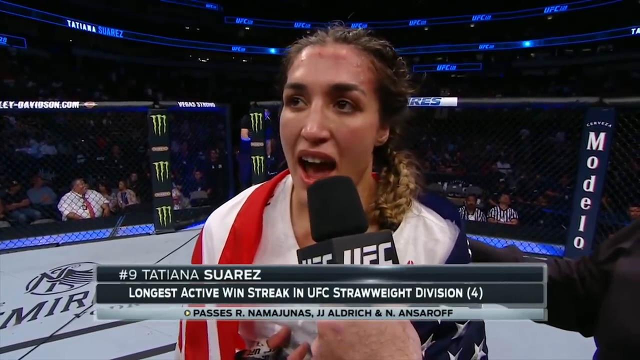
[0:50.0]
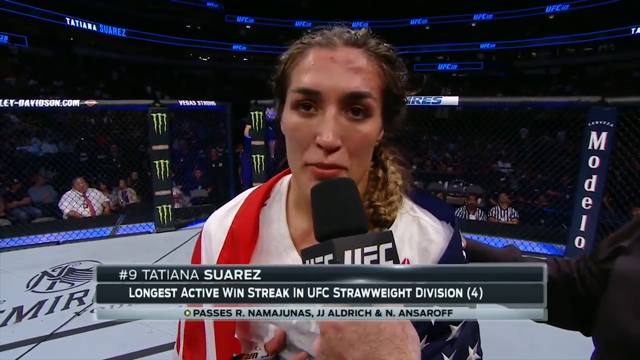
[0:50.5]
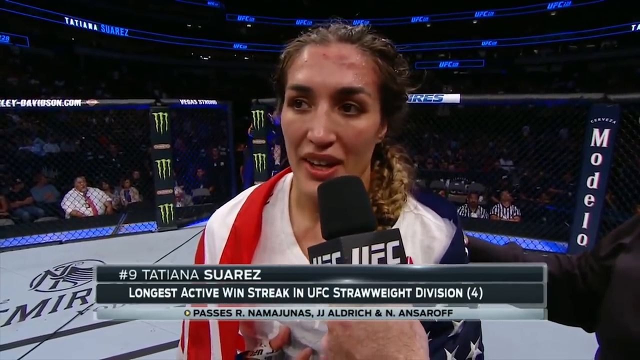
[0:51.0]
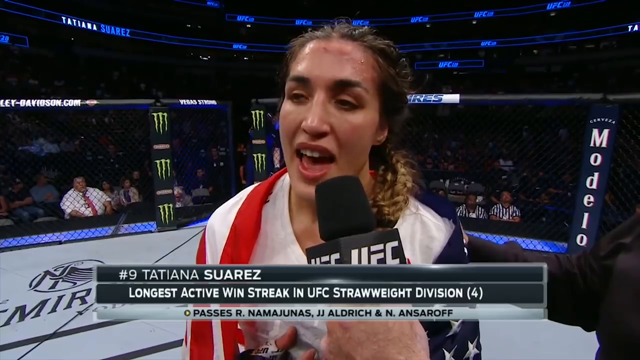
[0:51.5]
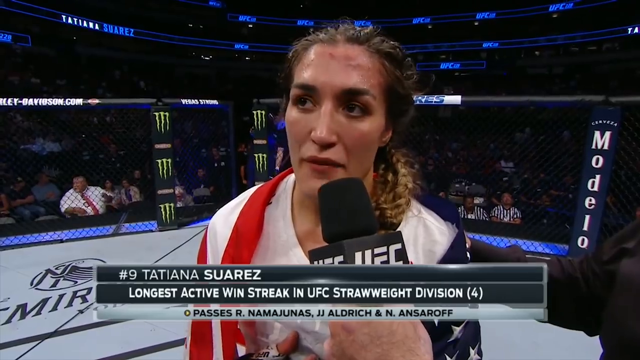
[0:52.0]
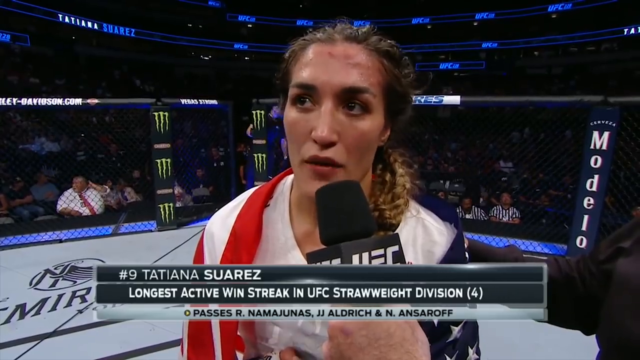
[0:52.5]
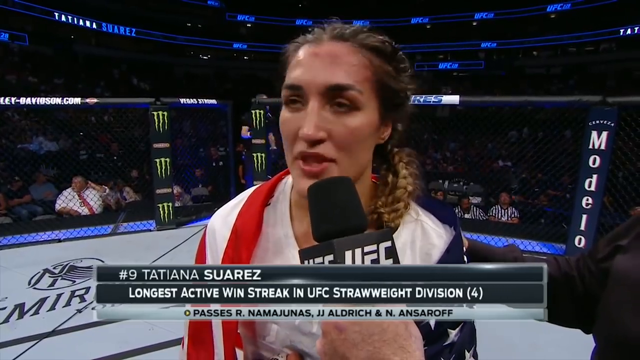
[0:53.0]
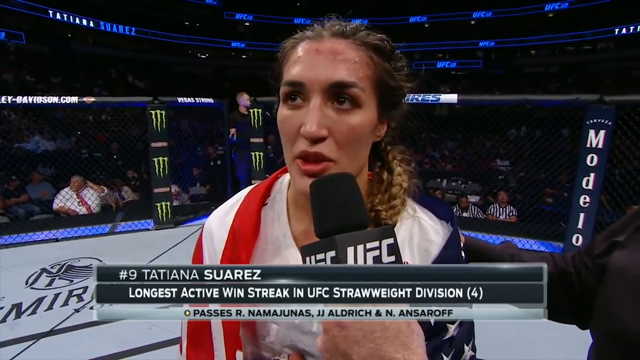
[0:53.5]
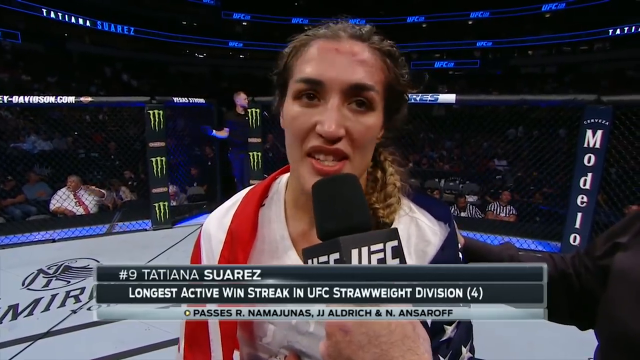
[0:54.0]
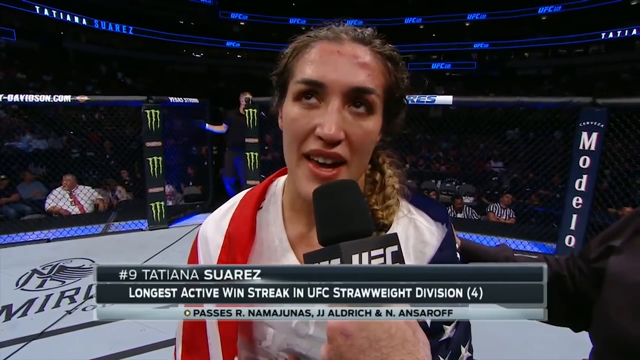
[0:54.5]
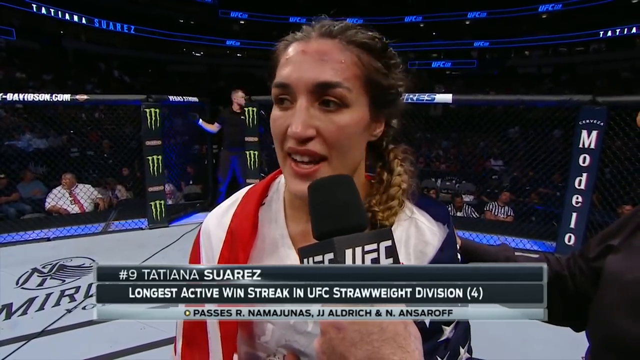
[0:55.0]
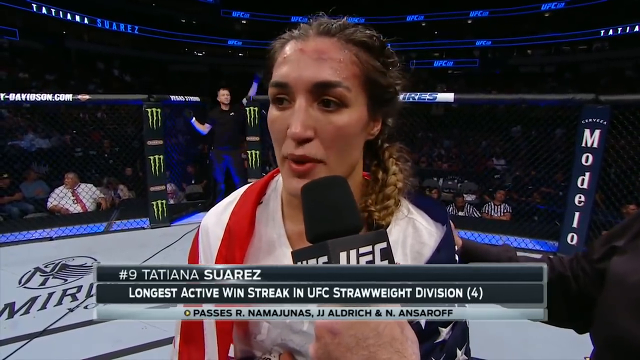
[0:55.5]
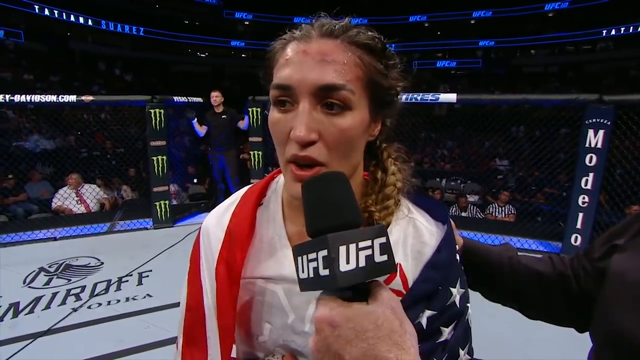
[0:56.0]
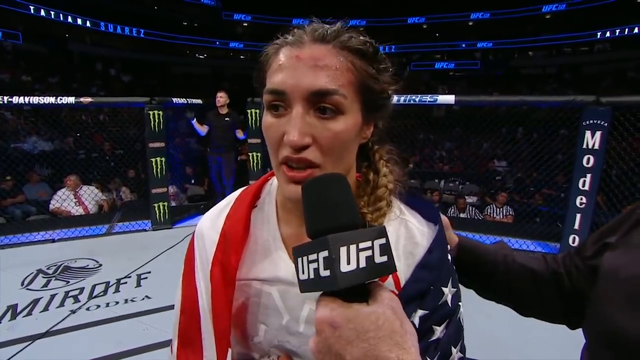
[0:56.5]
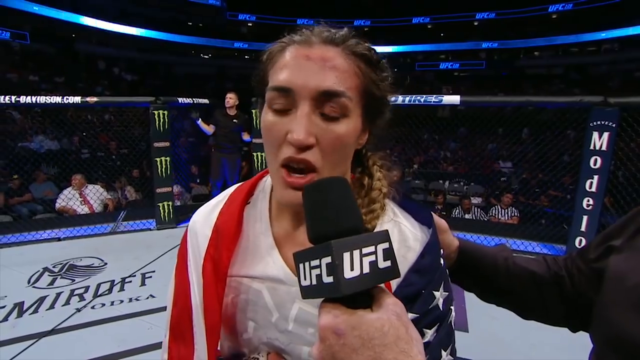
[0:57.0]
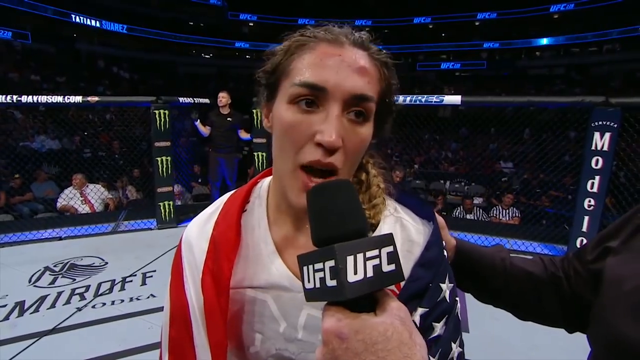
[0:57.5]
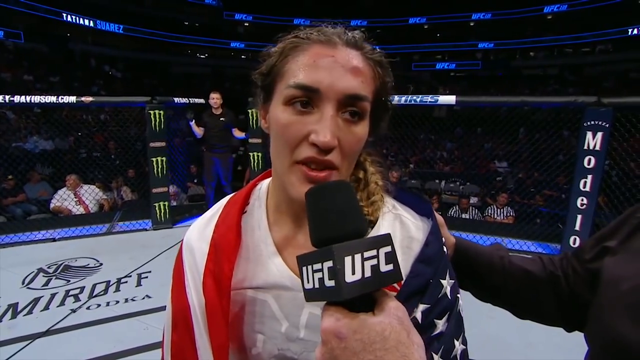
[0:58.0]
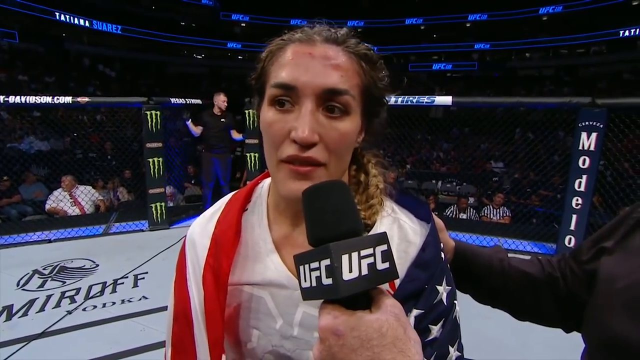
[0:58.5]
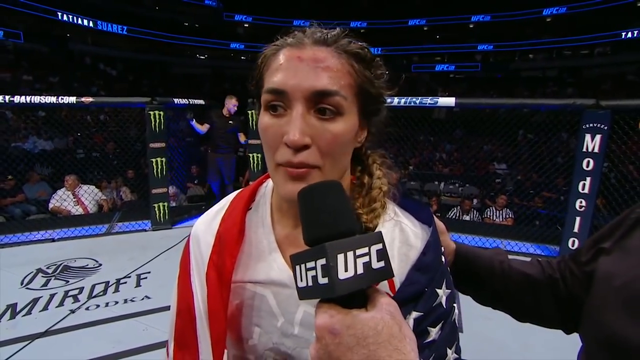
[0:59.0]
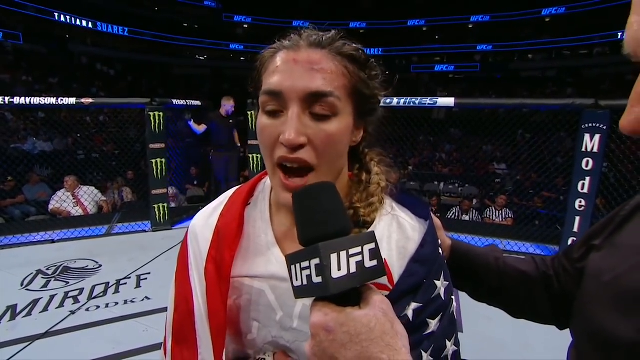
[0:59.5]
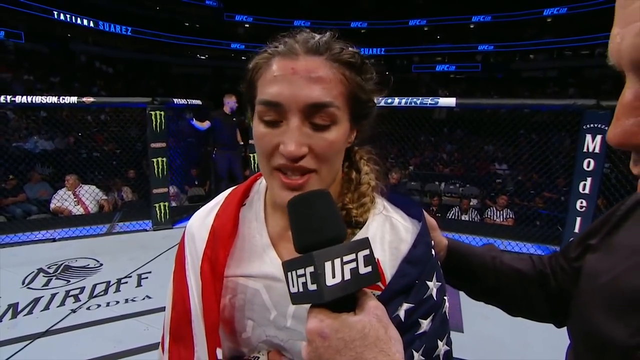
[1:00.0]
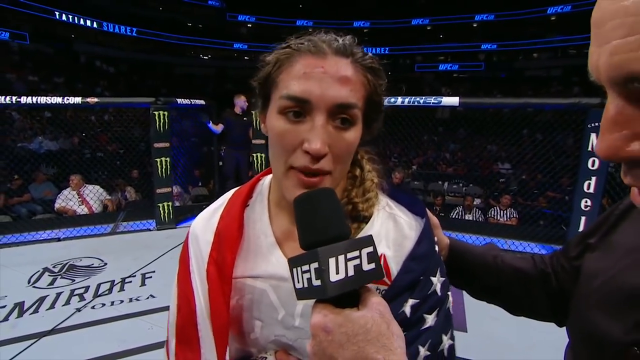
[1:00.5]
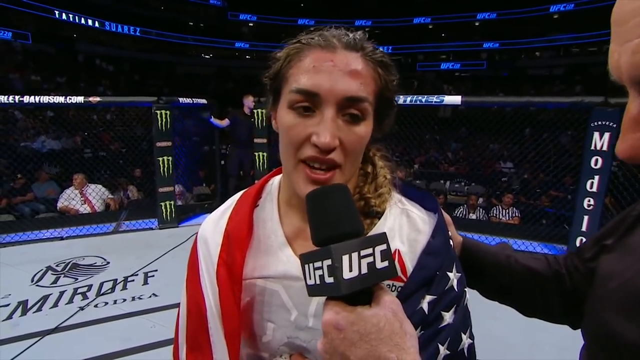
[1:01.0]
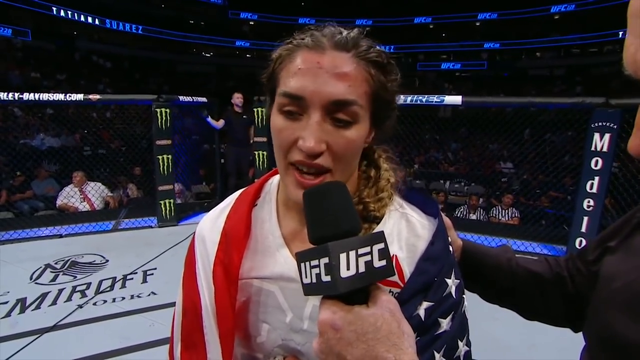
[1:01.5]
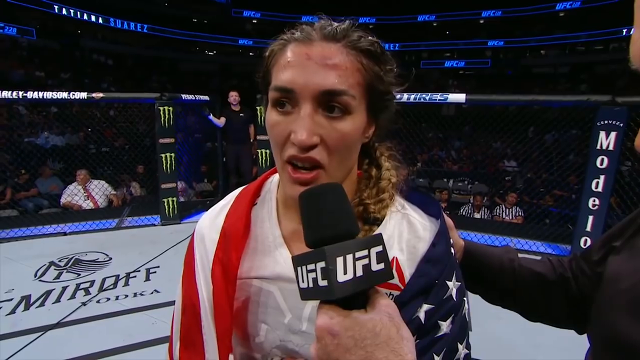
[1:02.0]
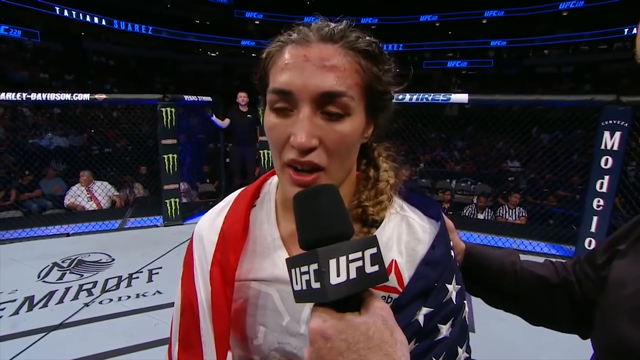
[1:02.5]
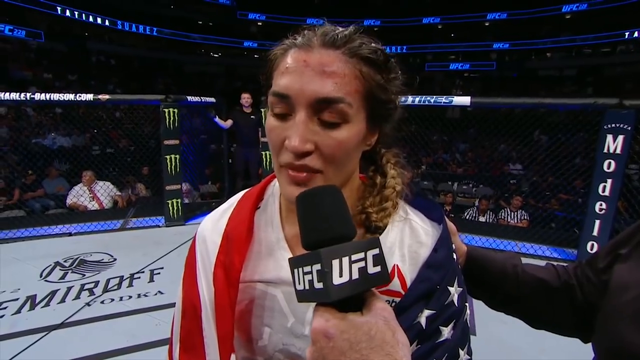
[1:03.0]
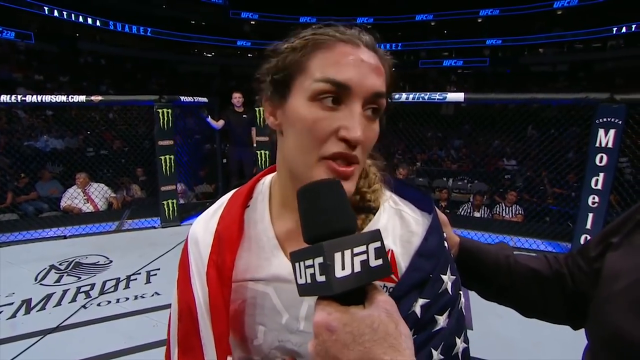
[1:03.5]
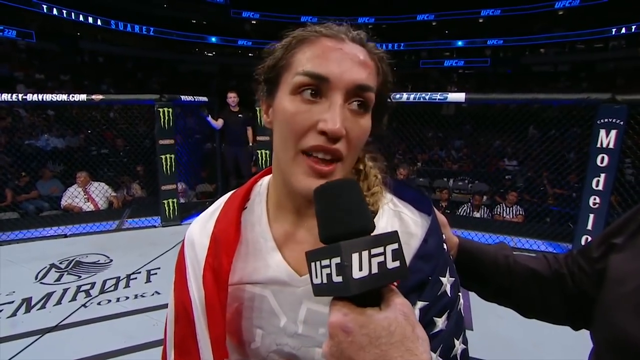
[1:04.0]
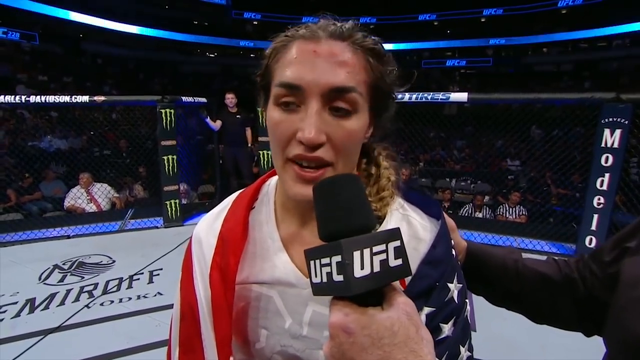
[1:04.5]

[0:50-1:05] Tatiana Suarez, number nine, has the microphone up to her, held in the announcer's left hand. "EMIROFF vodka" is on the ring to her left, and Monster Energy appears on both turnbuckles behind her. A man who looks like a referee, in a black polo shirt and black gloves, stands between the two Monster logos. Text appears at the very bottom of the screen, and "Toyo tires" is visible over the left side of her head. The top of her head has some marks, cuts and bruises. "Modelo" is written vertically on the turnbuckle on the right side of the screen, and "UFC" appears in white lettering in a red box in the bottom right corner. "HarleyDavidson.com" is written in white letters on one turnbuckle. The audience area is pretty dark, but some people in the front row are visible, apparently wearing white shirts. Over the woman's left shoulder are two men in black and white referee outfits.